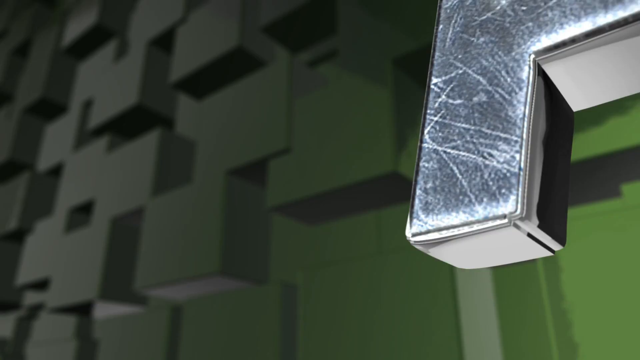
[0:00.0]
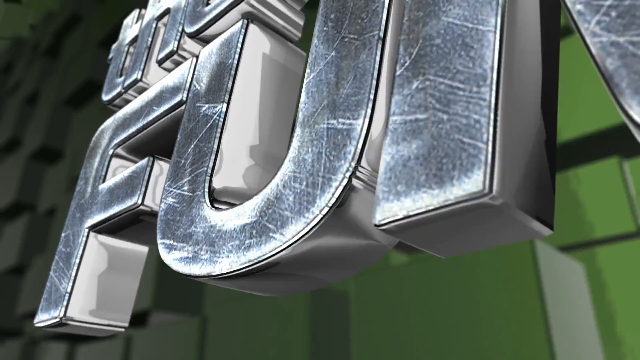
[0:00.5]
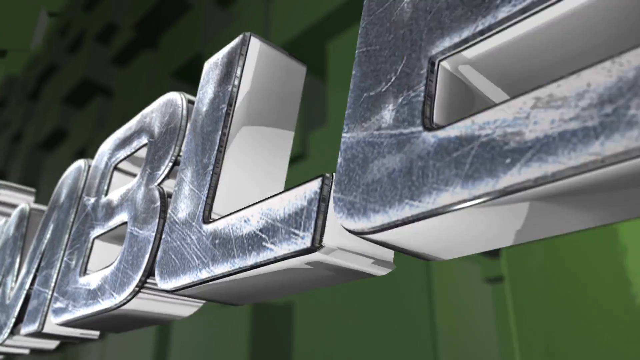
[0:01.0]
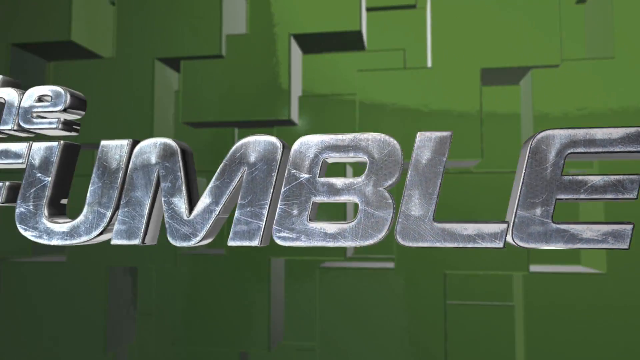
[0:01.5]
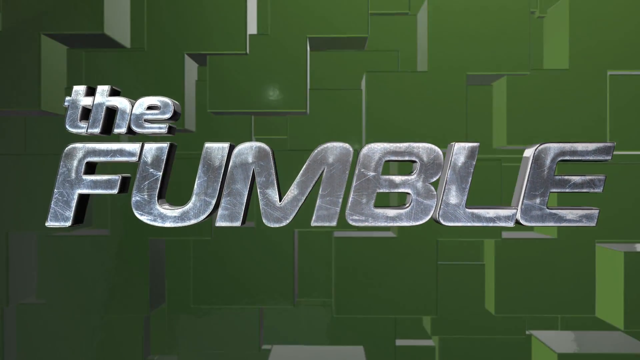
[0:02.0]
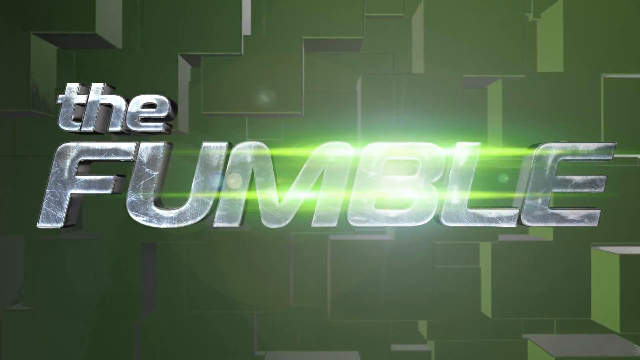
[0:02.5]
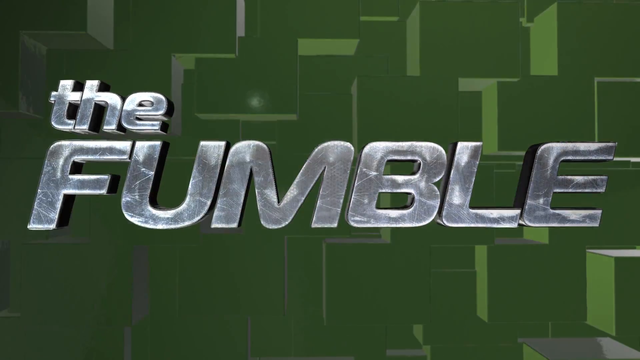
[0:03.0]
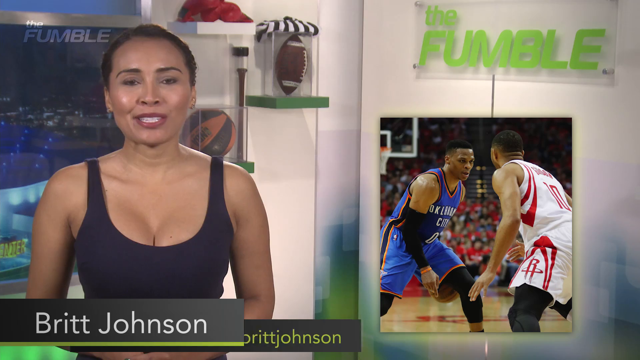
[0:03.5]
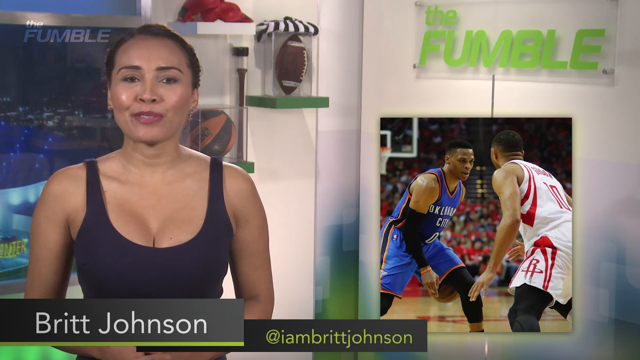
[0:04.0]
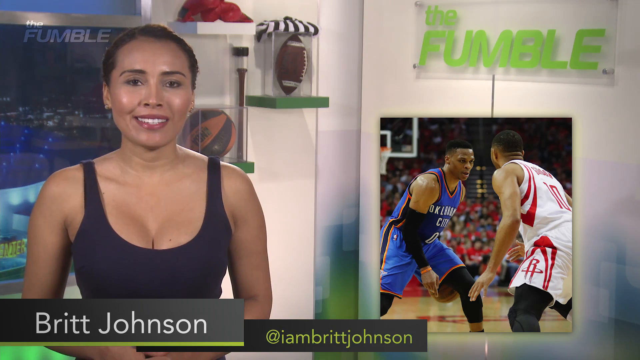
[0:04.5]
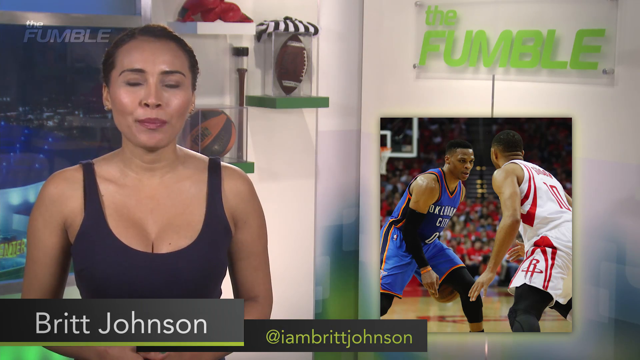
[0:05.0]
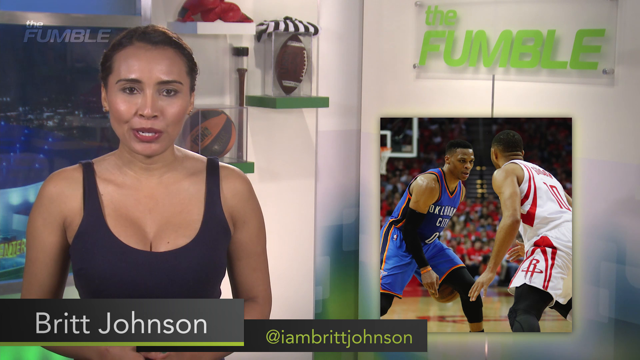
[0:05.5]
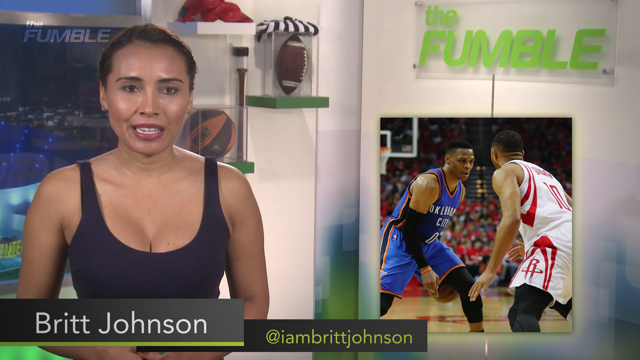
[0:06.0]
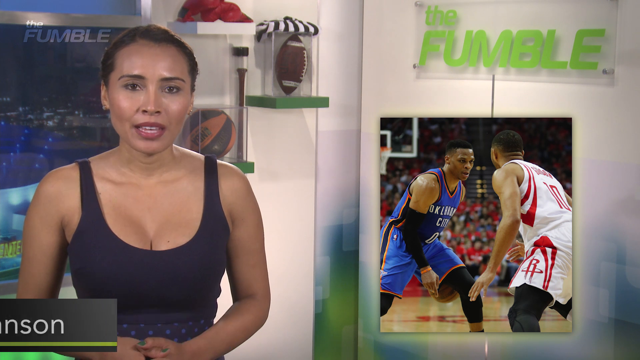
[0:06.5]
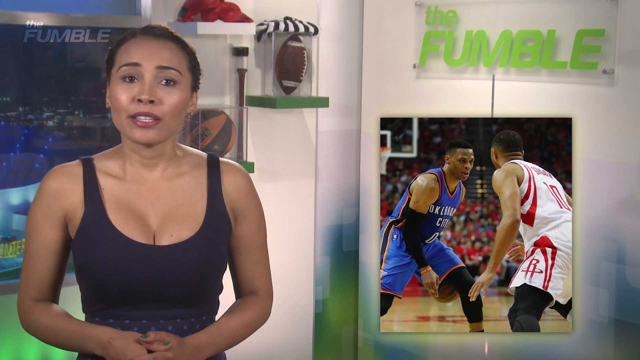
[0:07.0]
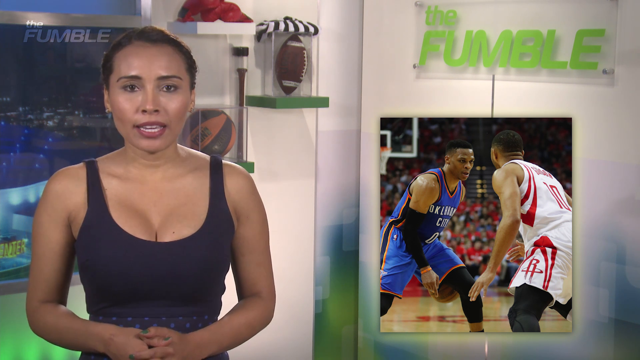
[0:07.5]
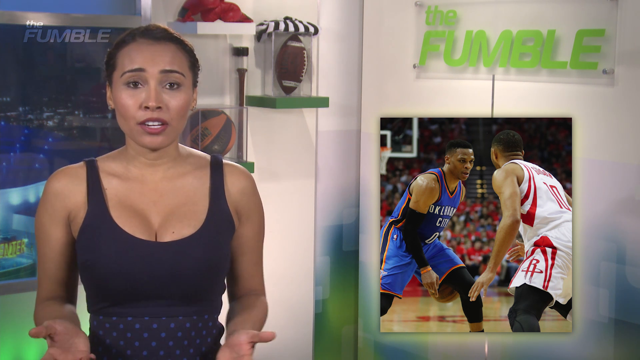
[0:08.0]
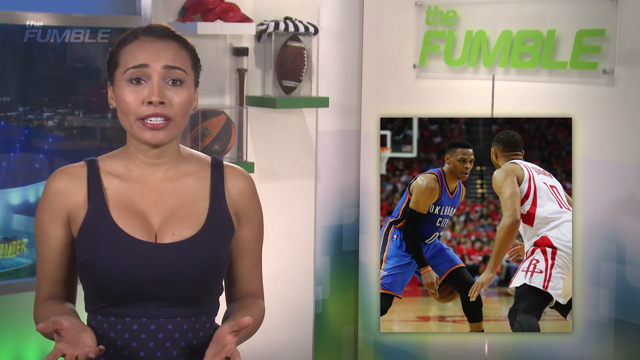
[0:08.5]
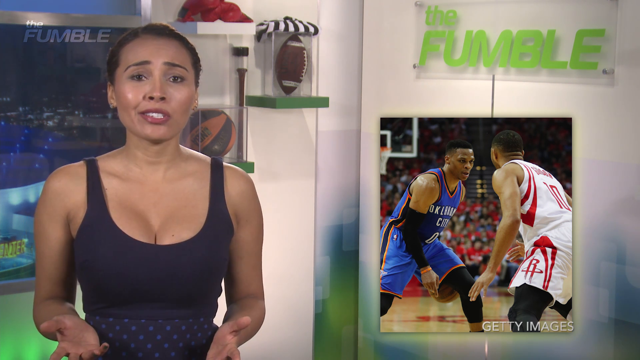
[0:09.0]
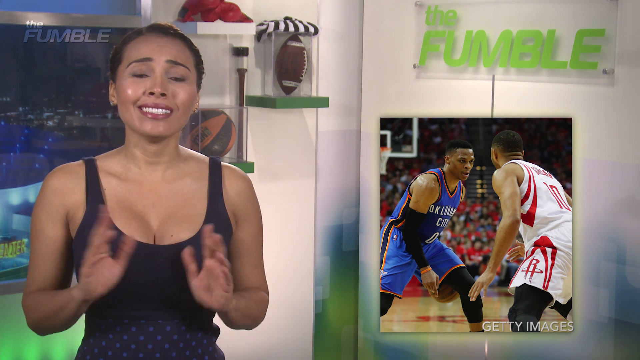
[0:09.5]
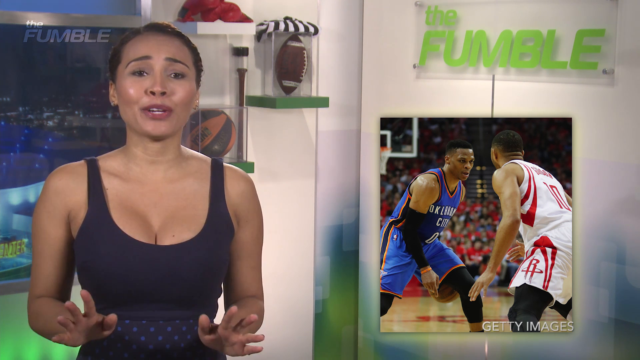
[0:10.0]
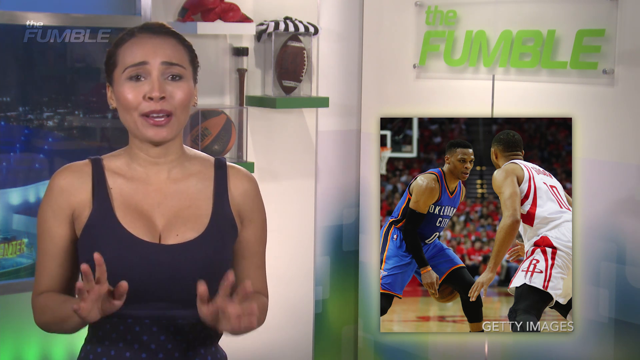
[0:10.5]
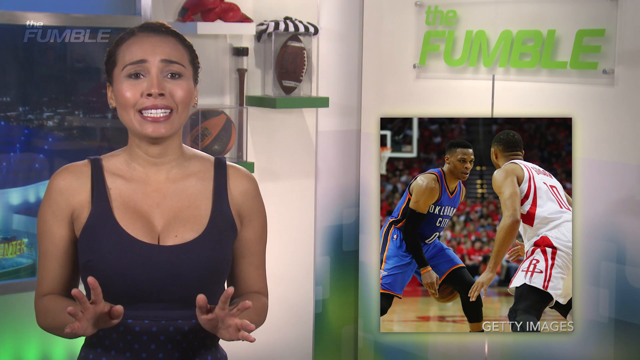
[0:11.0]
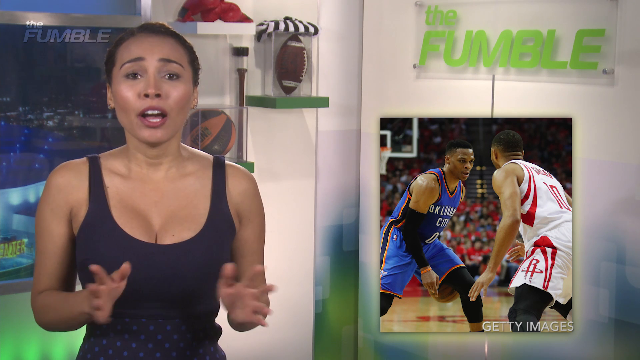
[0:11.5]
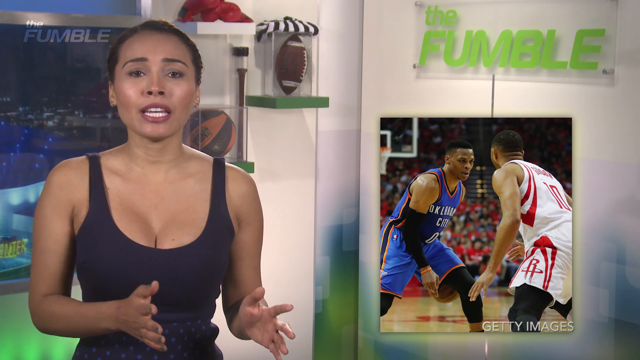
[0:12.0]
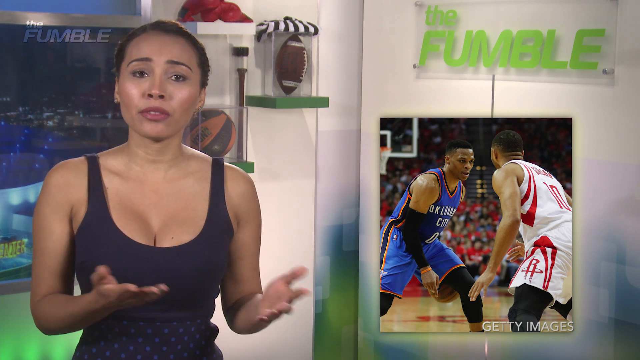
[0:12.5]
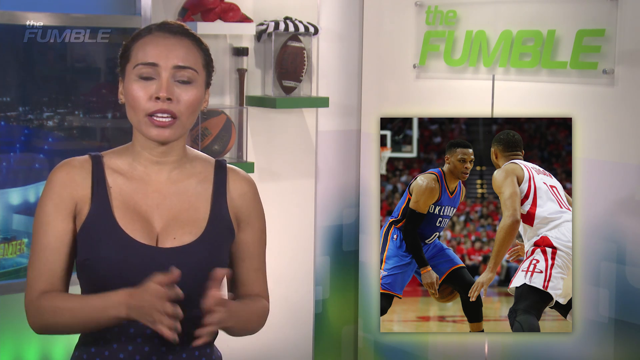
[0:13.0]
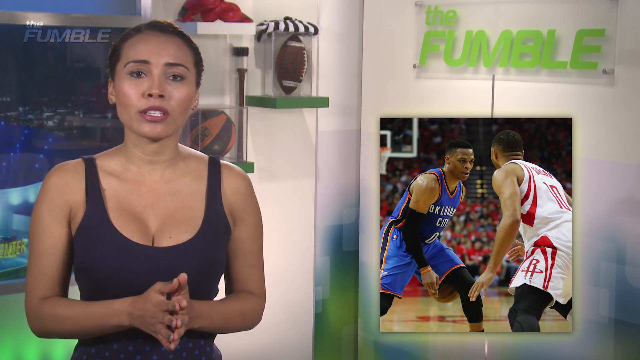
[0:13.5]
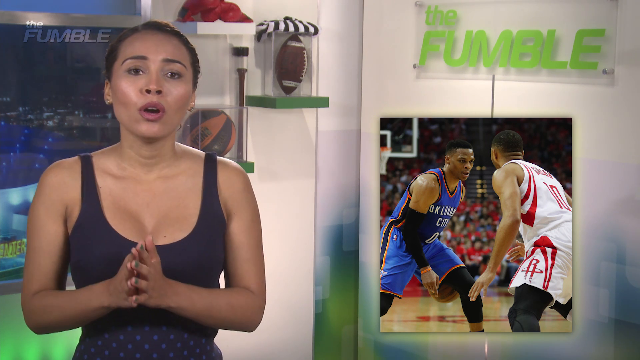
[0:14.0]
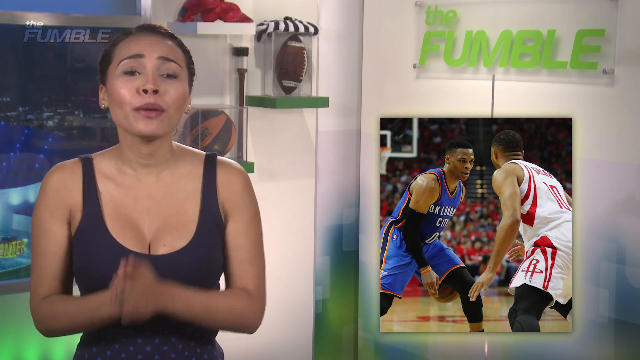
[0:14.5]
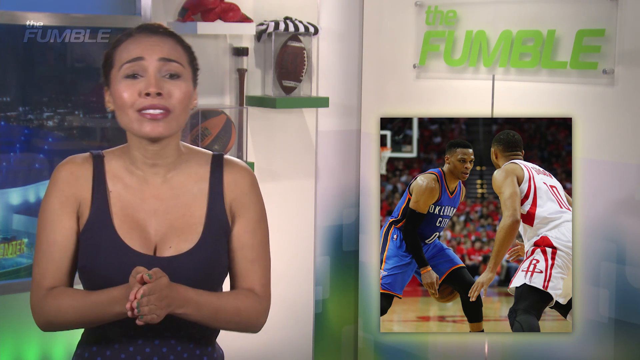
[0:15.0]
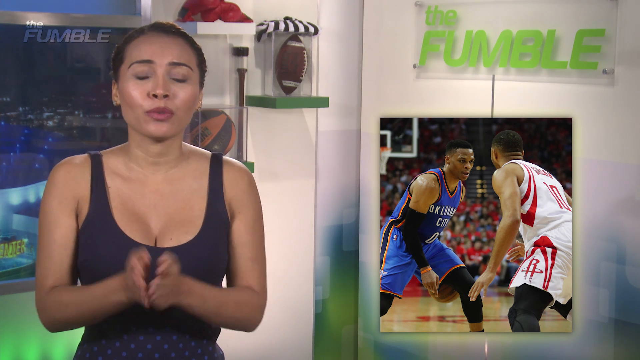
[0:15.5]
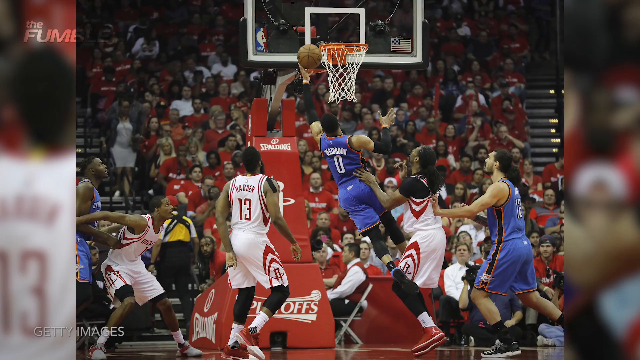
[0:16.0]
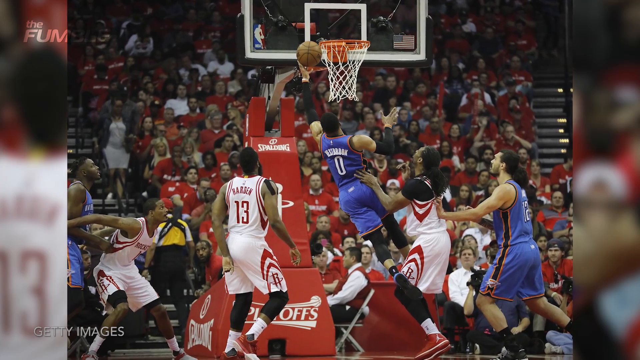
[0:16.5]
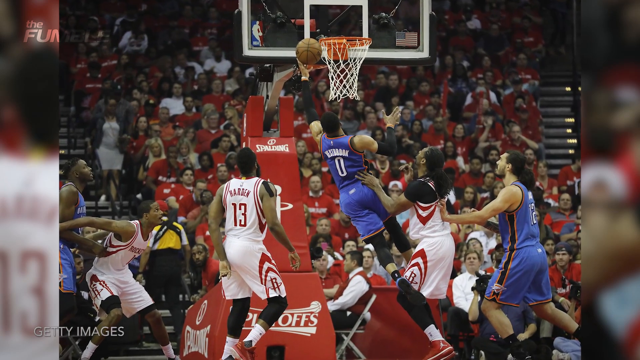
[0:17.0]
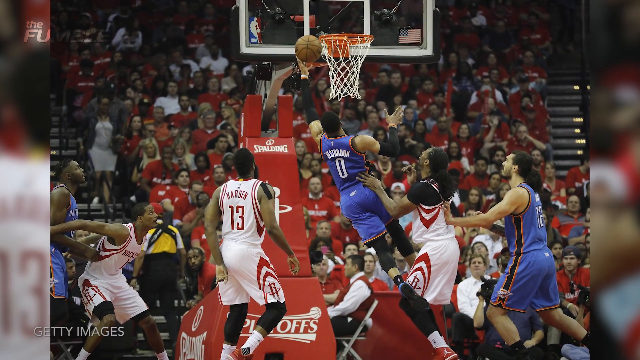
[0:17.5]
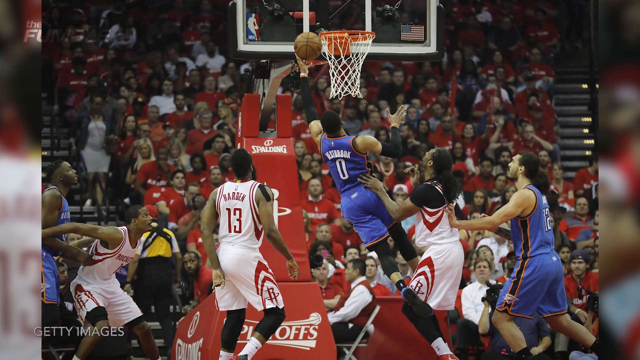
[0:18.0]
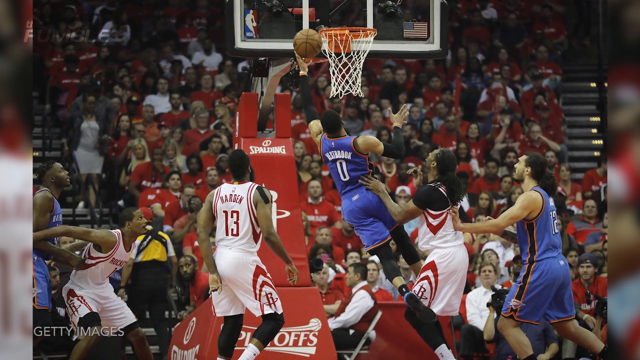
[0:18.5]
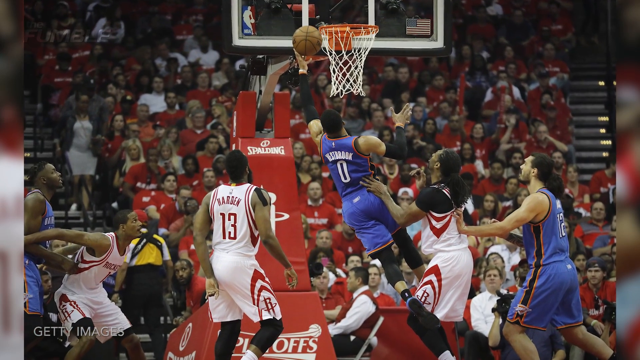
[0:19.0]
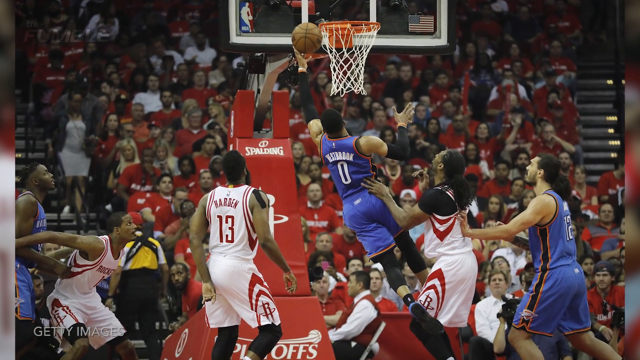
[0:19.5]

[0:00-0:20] A woman presenter, identified as Britt Johnson with the handle @IamBrittJohnson, appears on screen. She is in her 30s and wears a blue top. Behind her in the studio there is a basketball and also a rugby ball. She seems to be about to present a game between two teams: a Rockets player in white with the number 10 and an Oklahoma City player in blue are shown. She begins presenting, gesturing a lot as she addresses the viewers. Next, Oklahoma City's number 0 is shown scoring what seems to be a very difficult basket; the presenter is probably highlighting this player.